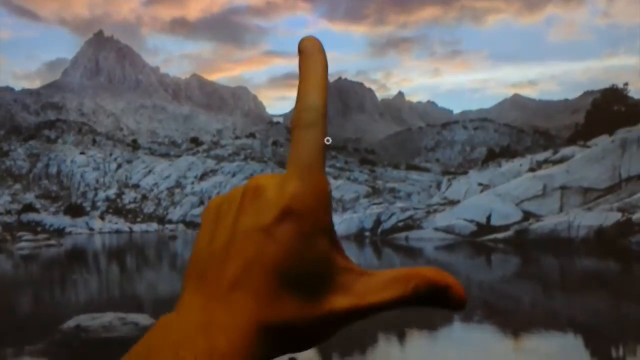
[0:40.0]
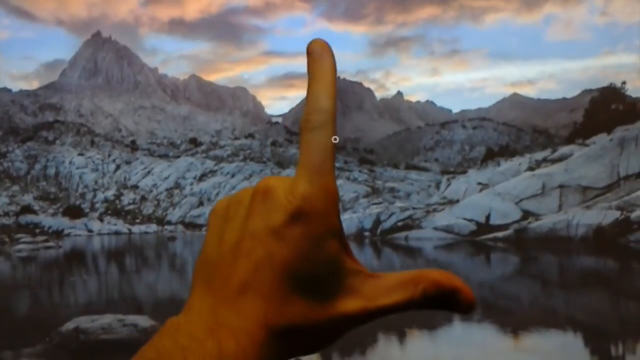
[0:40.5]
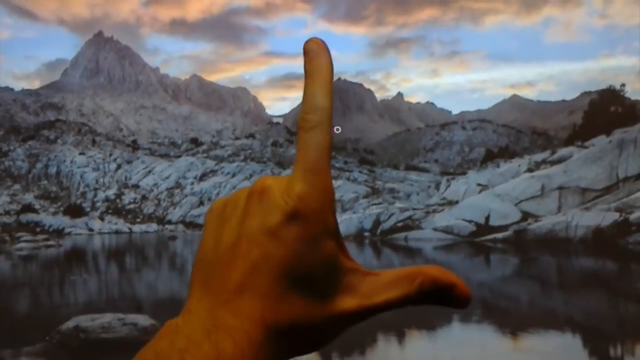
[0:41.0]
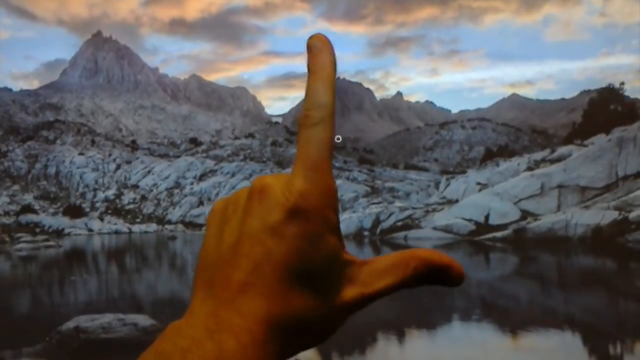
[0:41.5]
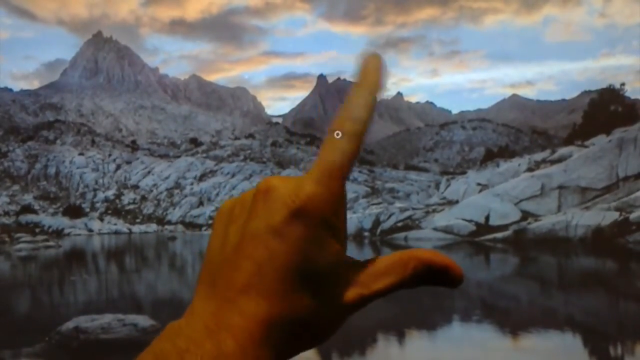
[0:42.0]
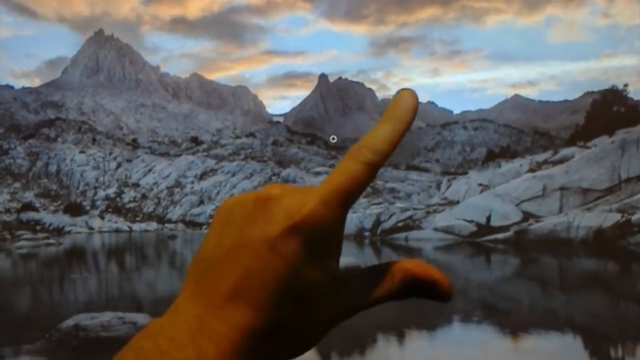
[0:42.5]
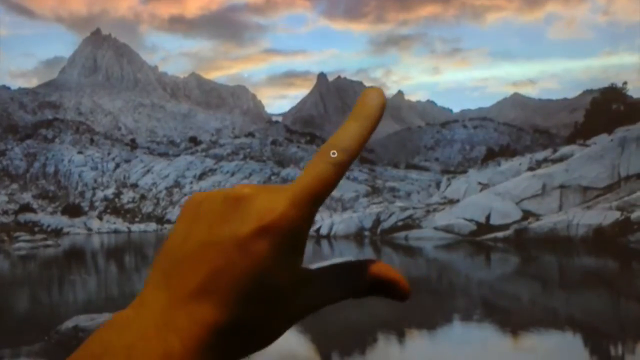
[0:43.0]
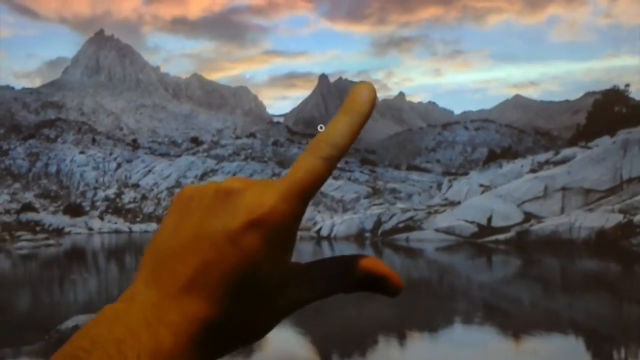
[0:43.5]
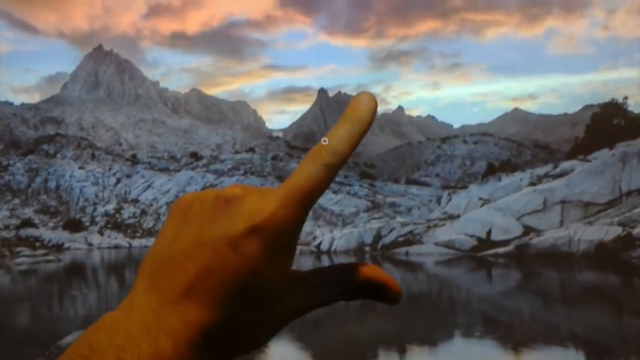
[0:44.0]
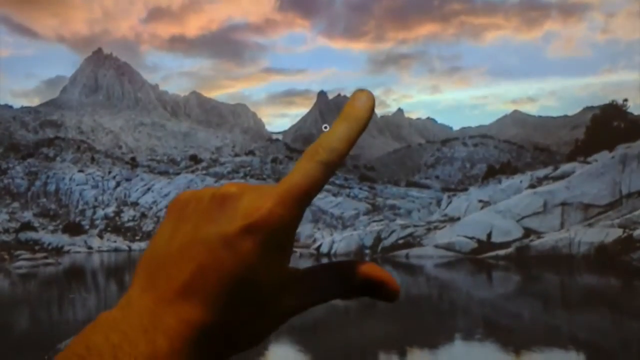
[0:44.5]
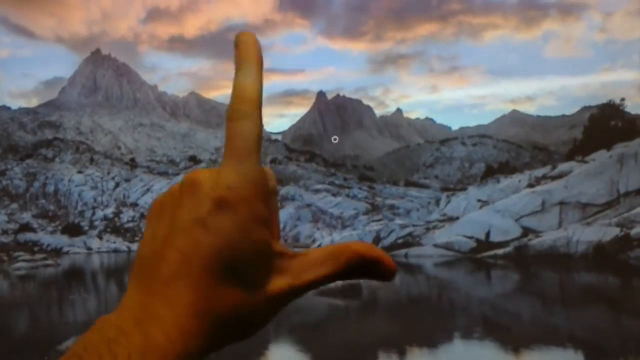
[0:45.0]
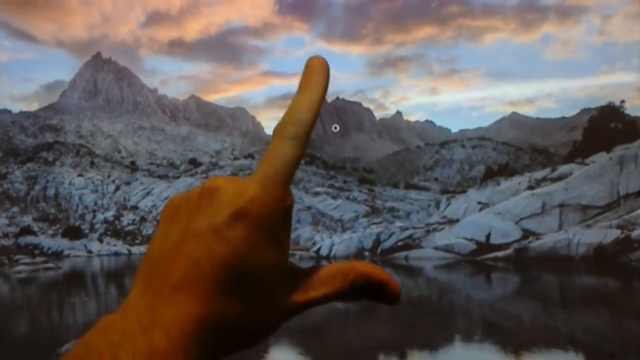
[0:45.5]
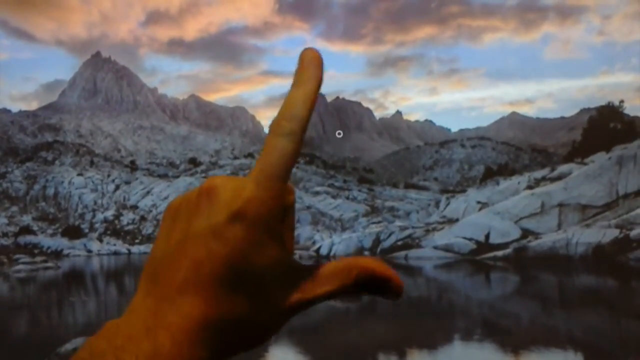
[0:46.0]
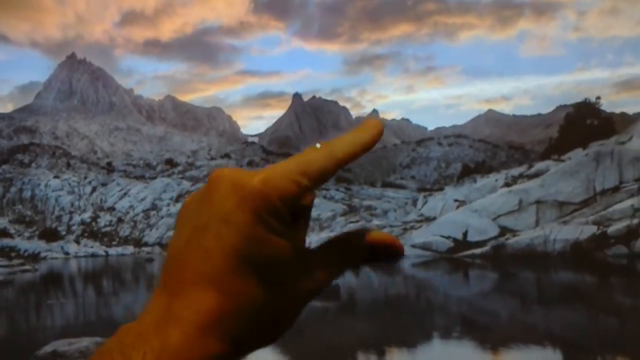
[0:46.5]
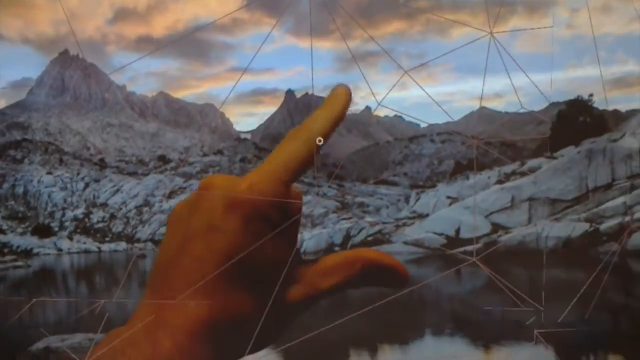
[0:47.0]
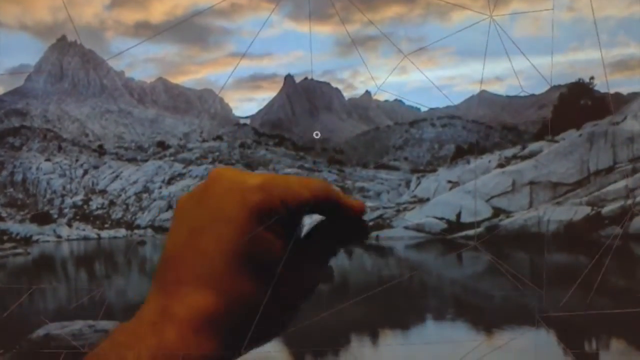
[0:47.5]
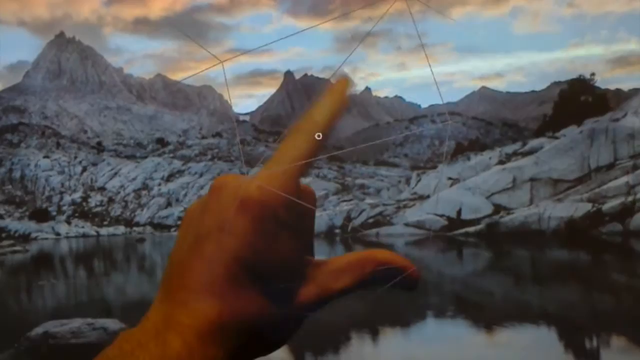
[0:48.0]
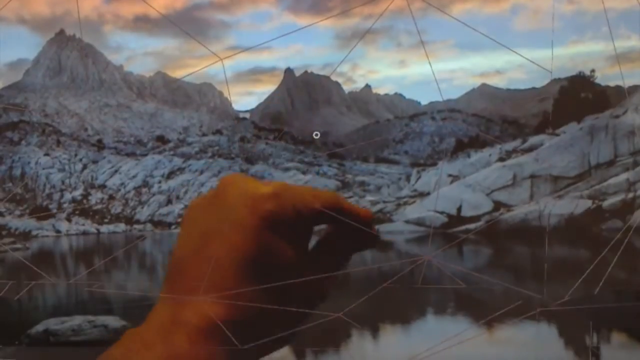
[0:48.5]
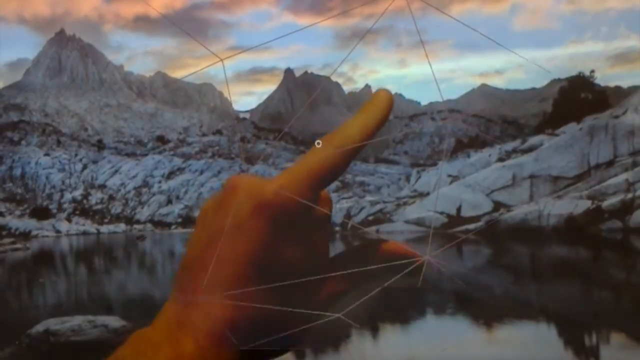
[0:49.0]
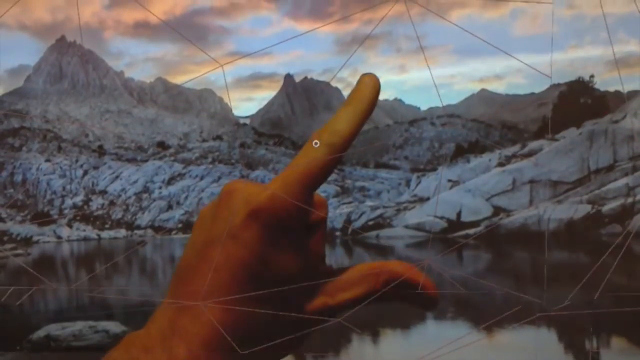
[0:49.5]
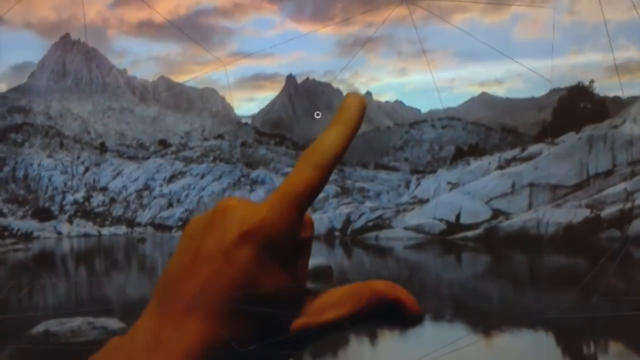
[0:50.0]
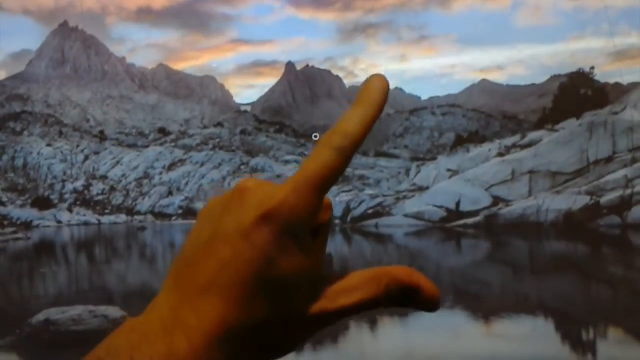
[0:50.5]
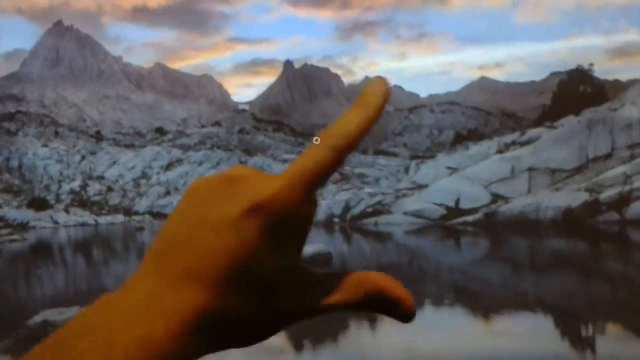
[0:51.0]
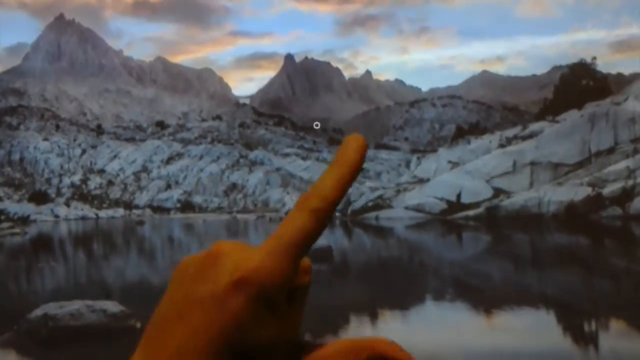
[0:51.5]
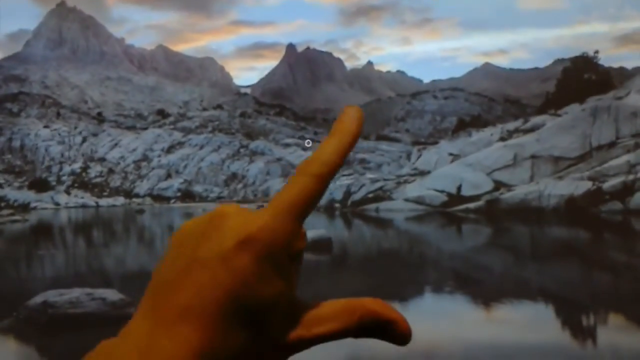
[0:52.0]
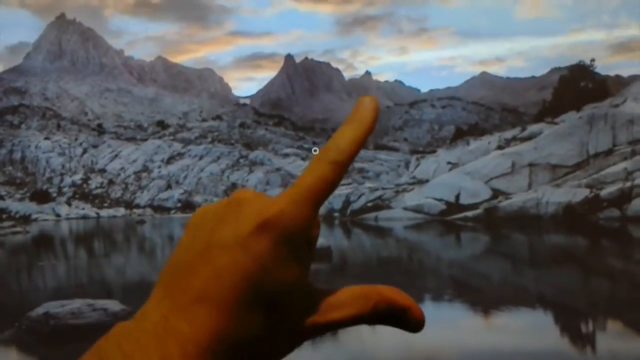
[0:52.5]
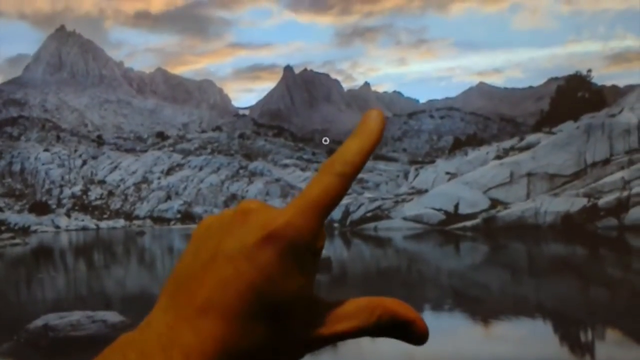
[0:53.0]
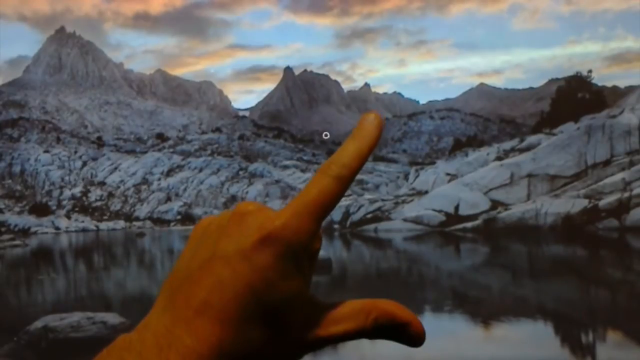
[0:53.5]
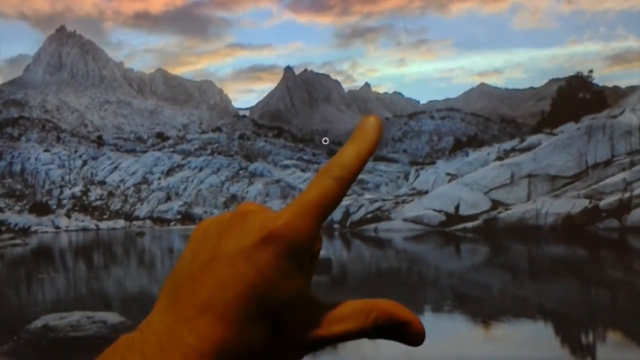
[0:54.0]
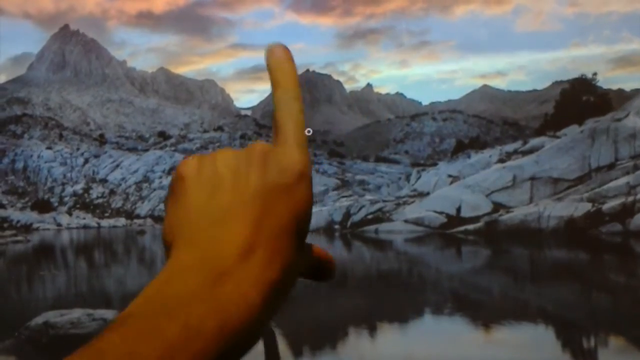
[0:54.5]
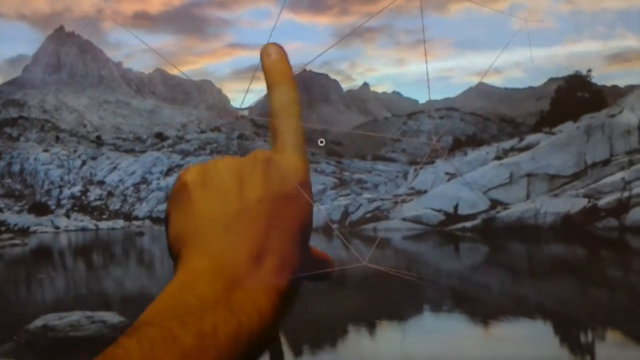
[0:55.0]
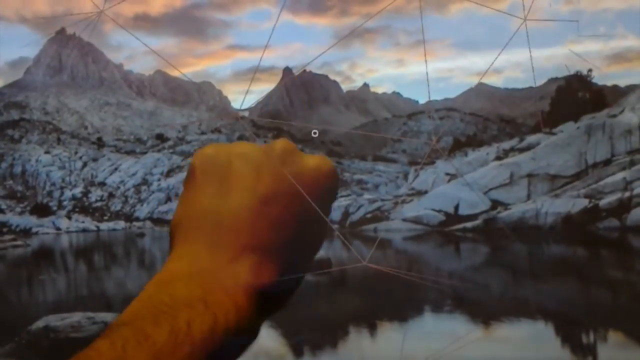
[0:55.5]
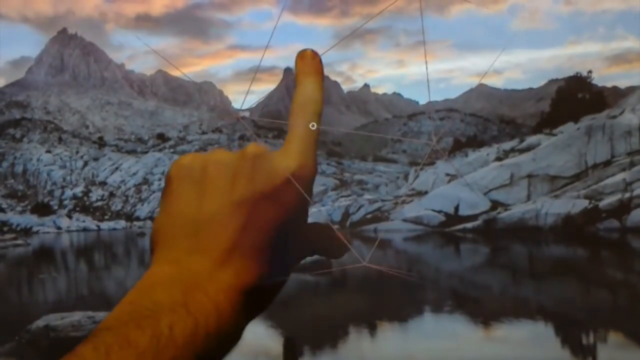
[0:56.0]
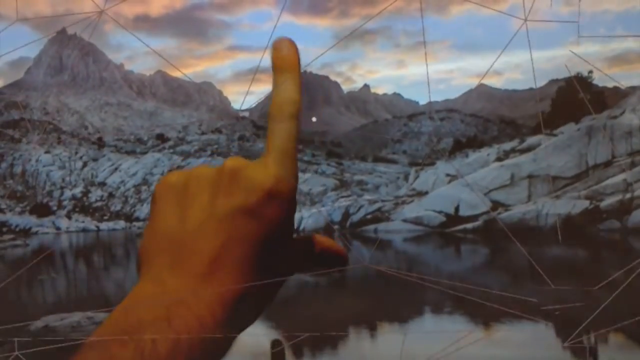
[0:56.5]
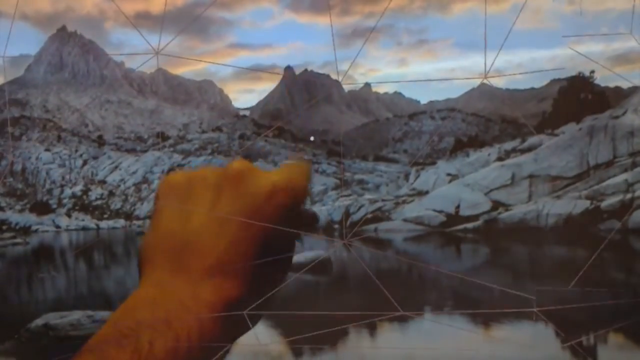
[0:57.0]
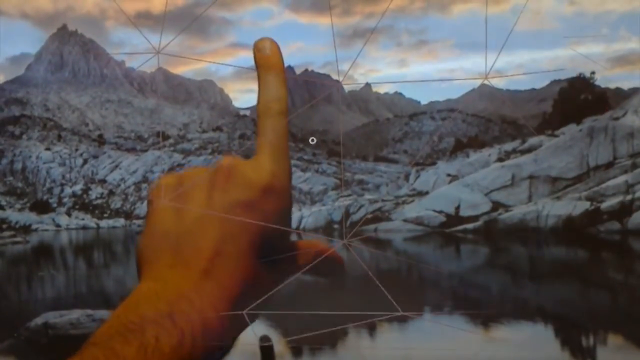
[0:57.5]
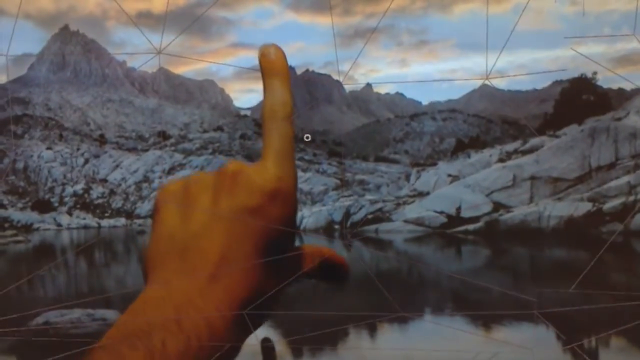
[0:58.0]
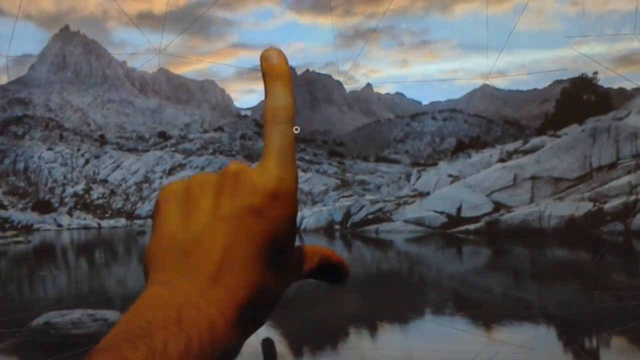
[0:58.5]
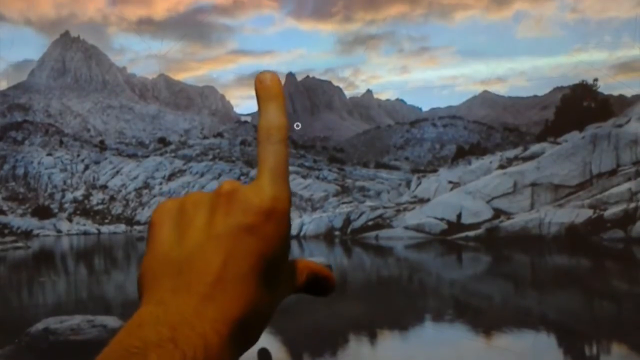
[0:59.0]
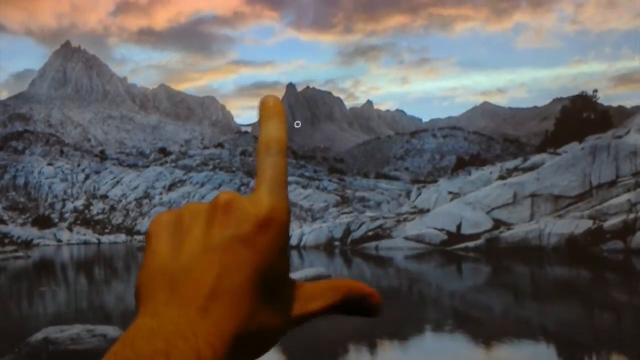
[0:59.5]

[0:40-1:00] The scene shows what looks like a body of water in front, with snowy, hilly ground beyond it, a mountain ridge behind that, and blue sky and clouds above. A left hand comes up from the bottom left toward the middle with its index finger and thumb extended in an L shape. It lowers the index finger a bit, raises it again, and then pinches the index finger and thumb together. When it pinches, many lines that look like augmented reality flash over the image, forming polygons, then fade out. The hand pinches at least four times, and each time the polygons of lines flash in and then disappear.